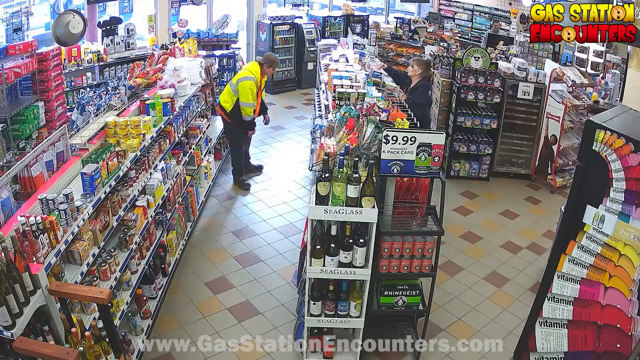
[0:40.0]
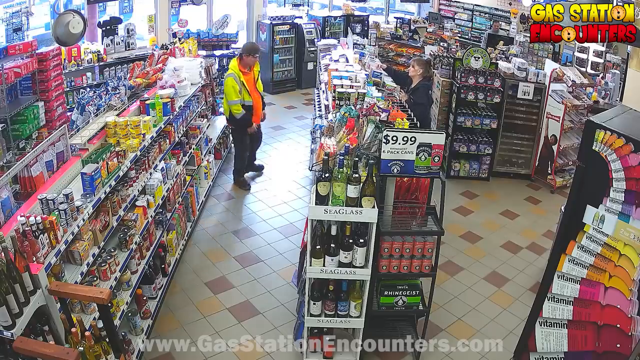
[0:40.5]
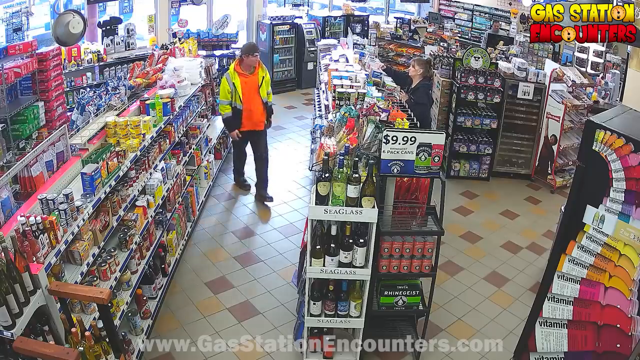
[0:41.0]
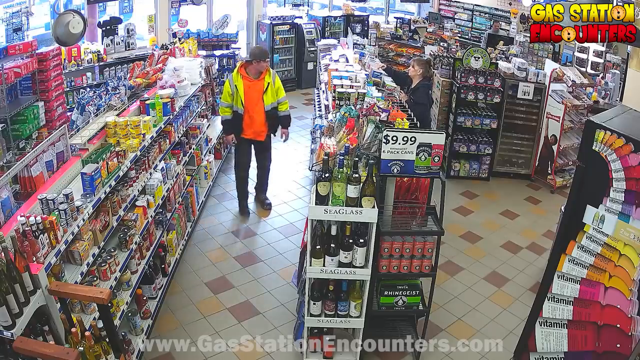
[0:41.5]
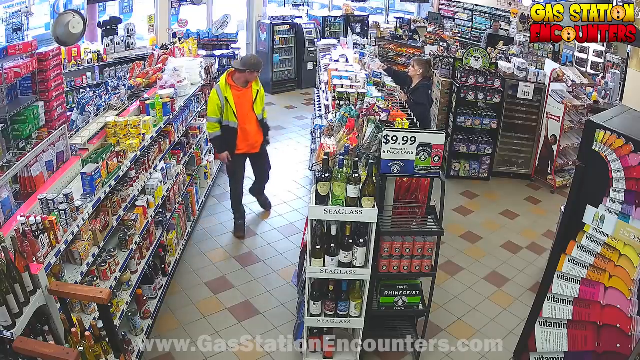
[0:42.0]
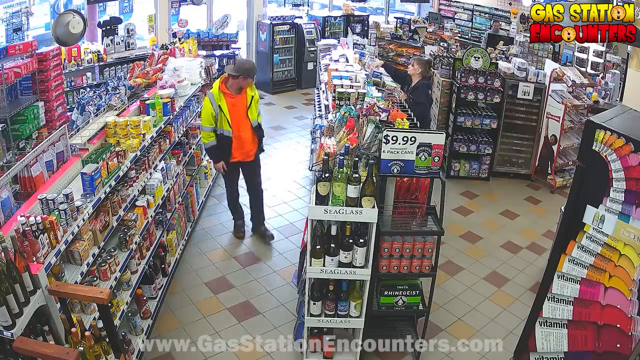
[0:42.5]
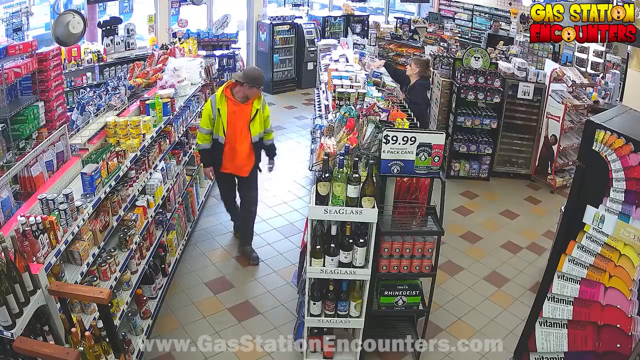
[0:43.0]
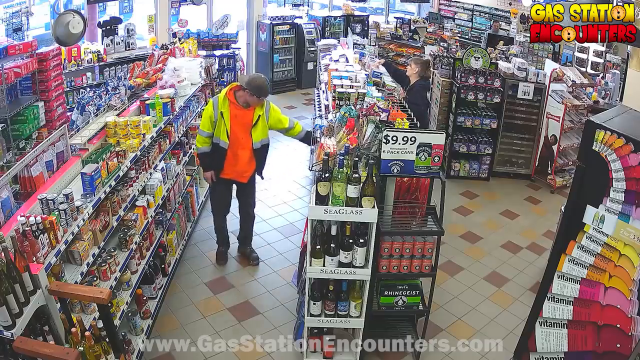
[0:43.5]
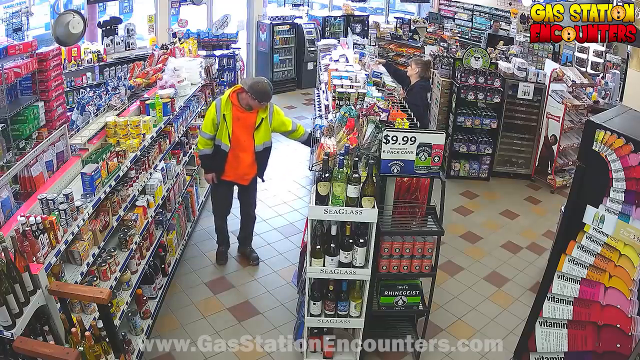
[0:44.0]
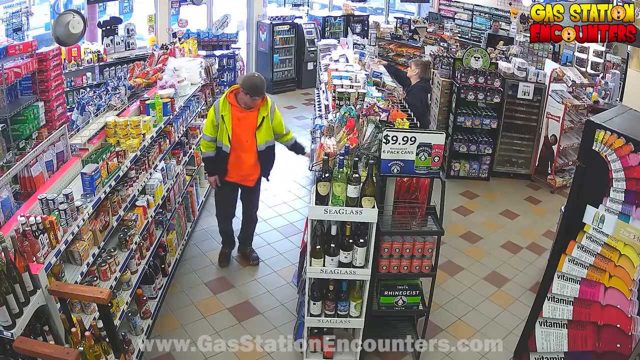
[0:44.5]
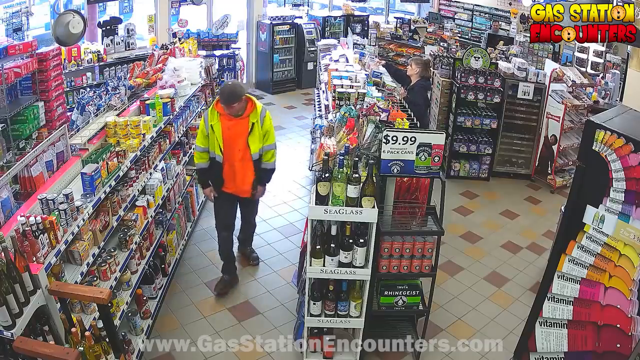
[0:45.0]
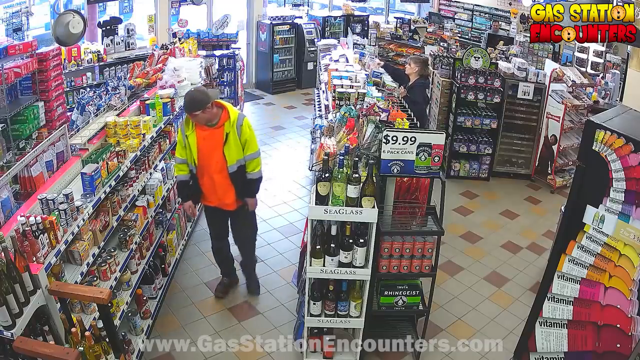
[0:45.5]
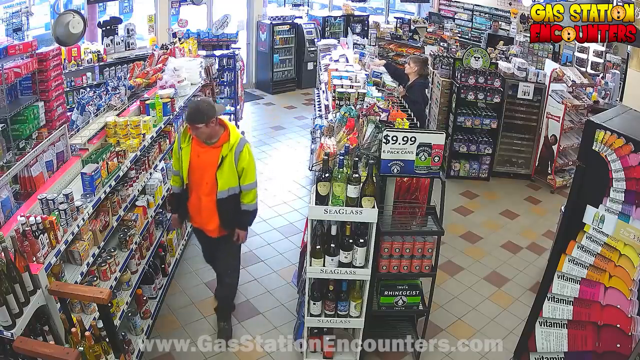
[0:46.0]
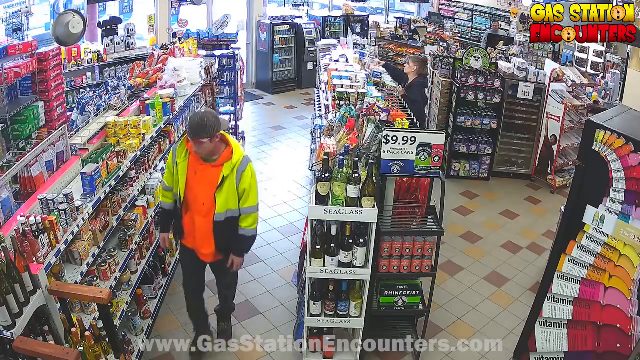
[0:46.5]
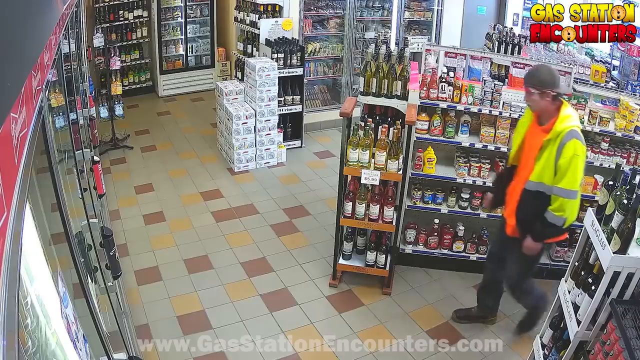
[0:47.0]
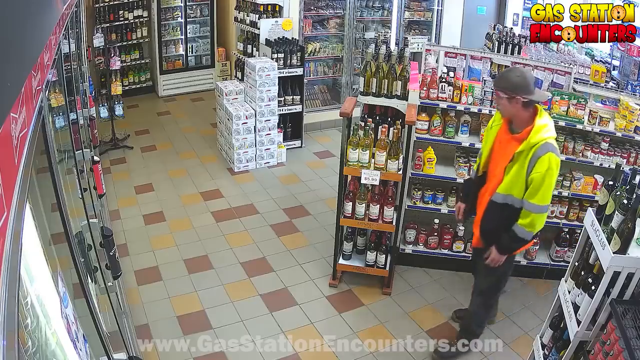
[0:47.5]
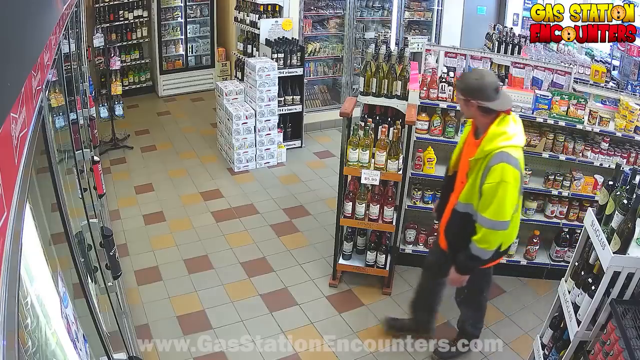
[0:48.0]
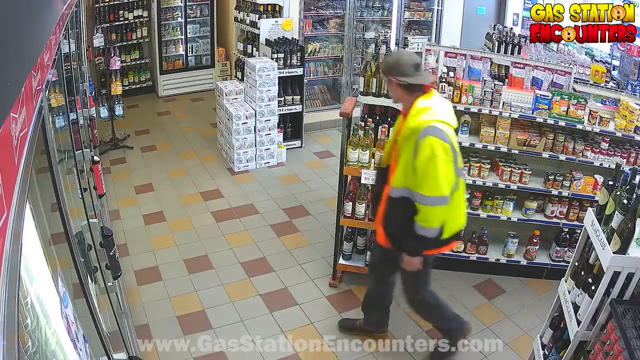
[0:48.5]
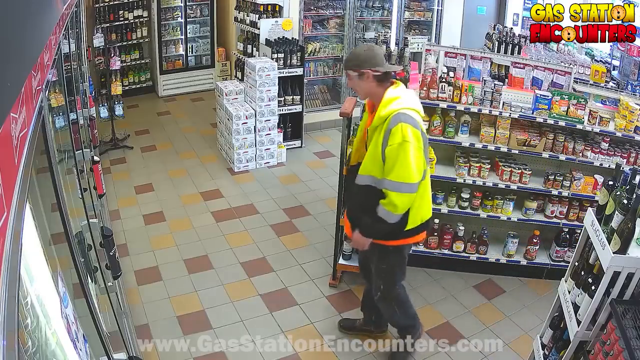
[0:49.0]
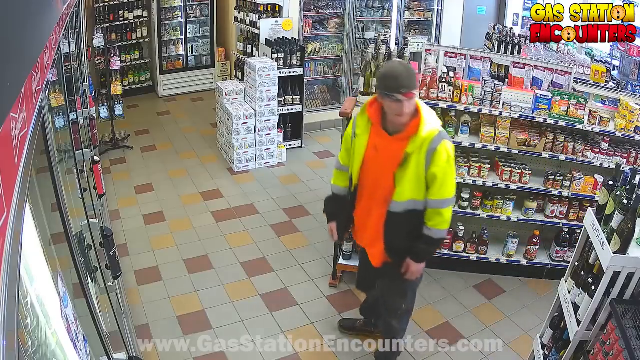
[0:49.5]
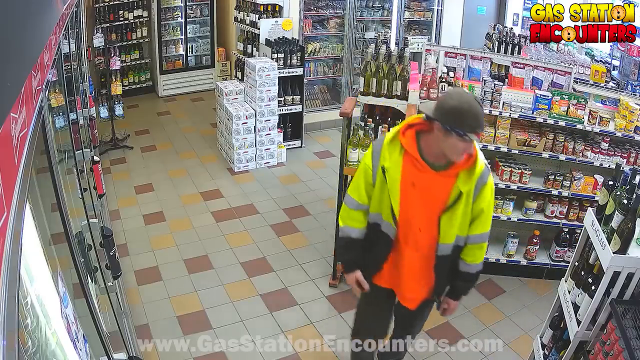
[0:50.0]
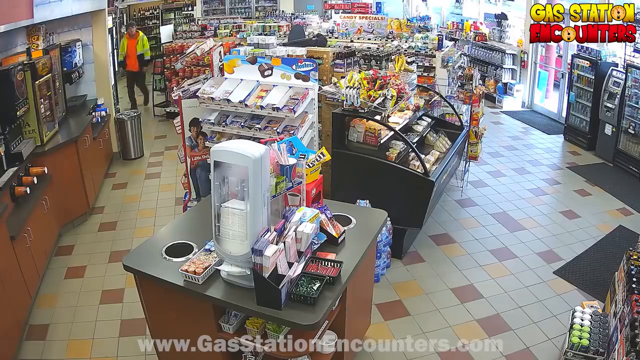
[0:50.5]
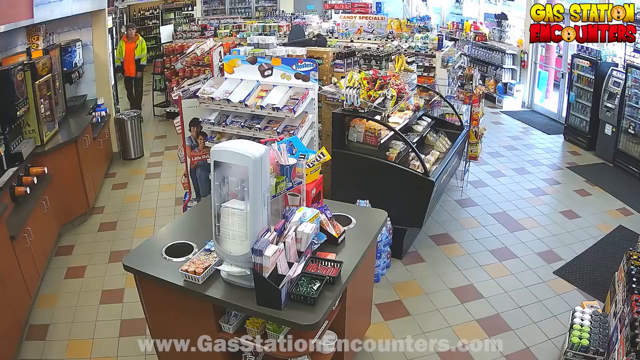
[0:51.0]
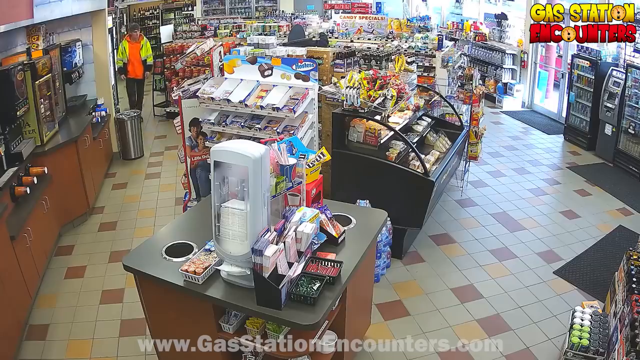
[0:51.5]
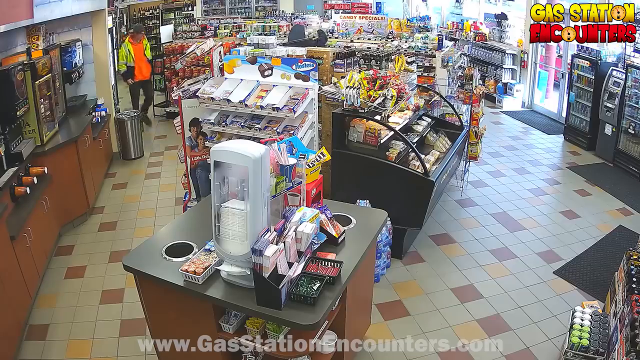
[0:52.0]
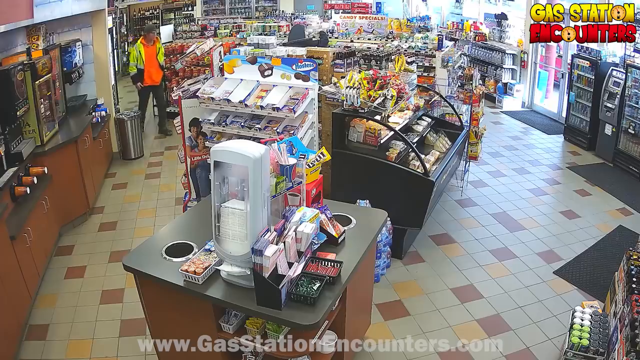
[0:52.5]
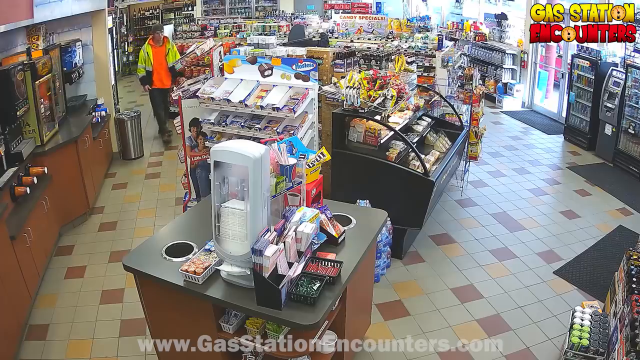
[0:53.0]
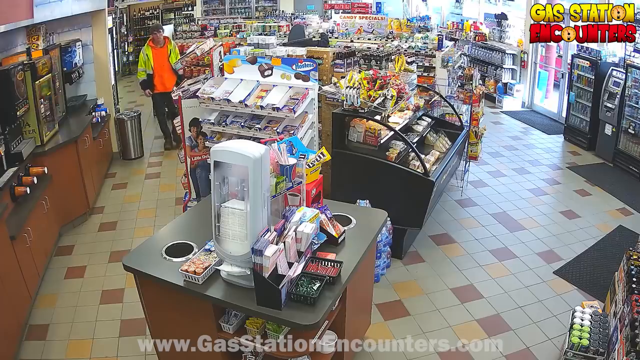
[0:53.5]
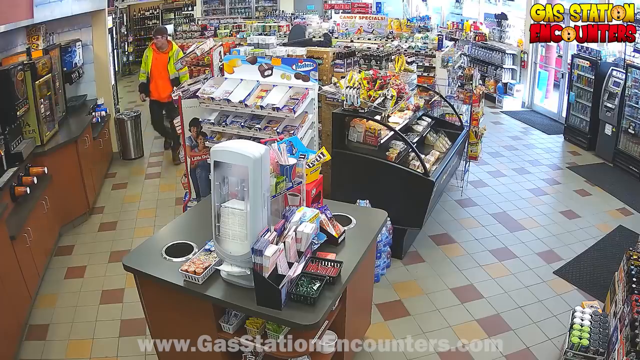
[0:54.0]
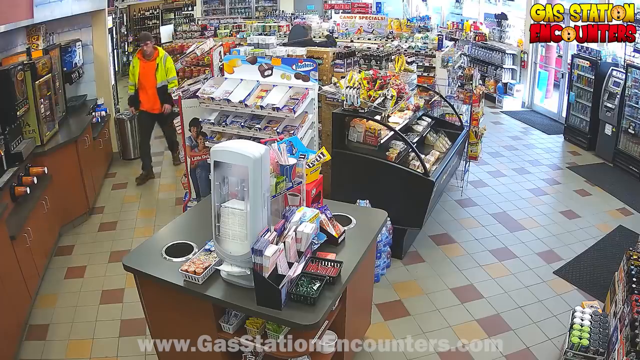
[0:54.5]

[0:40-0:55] The man in the orange sweatshirt and yellow vested jacket finishes browsing and stands back upright. Shown from the front, he has his head turned toward the items, starts walking toward the camera, and moves down the aisle, checking one item and putting his hand on it before continuing down the aisle. The next shot shows the man from a different camera angle, apparently with one arm in a pocket. The man then goes behind the other section where the coffee is.